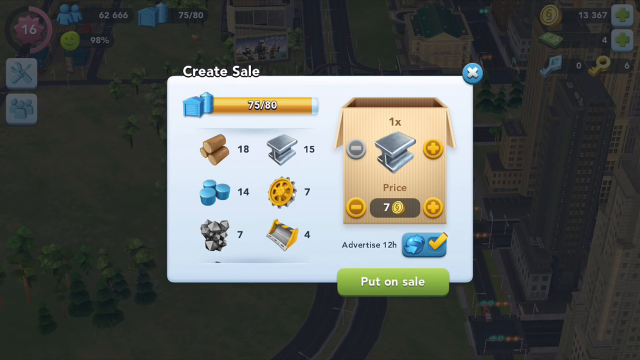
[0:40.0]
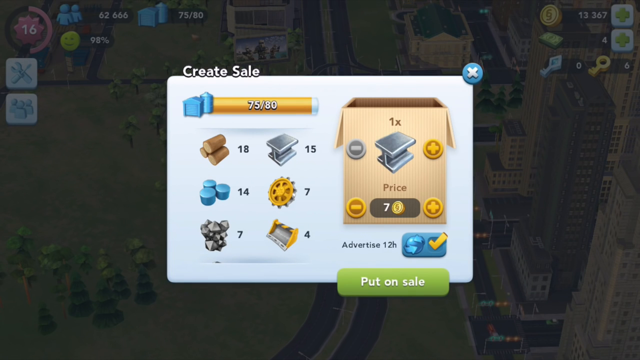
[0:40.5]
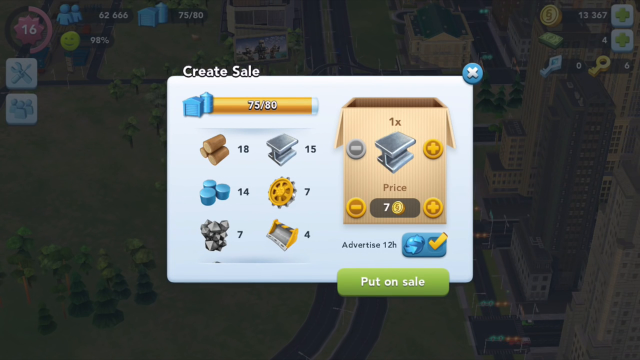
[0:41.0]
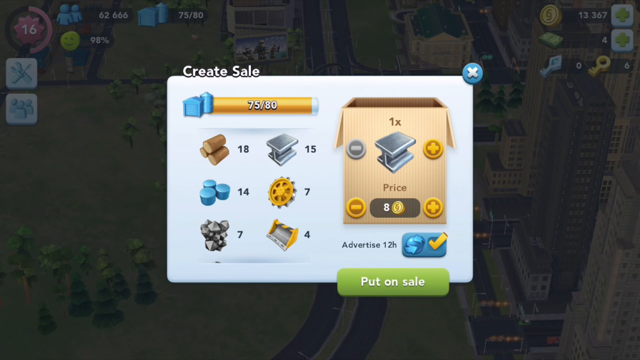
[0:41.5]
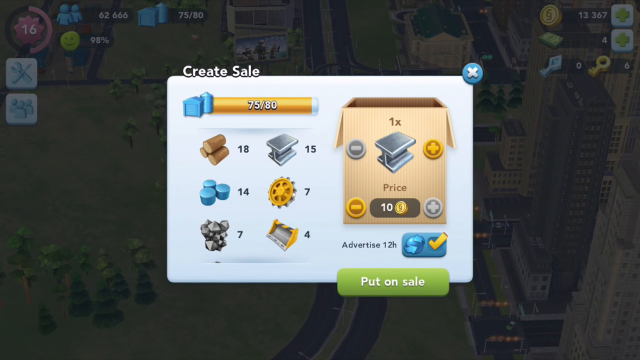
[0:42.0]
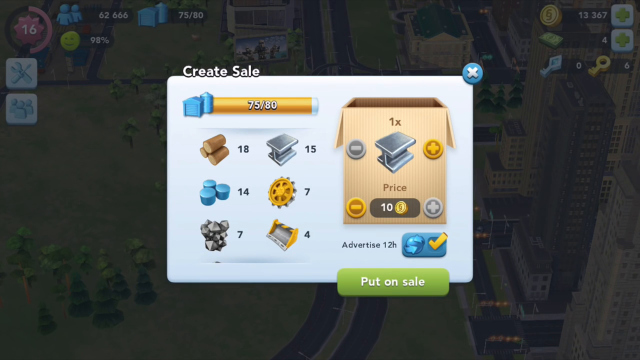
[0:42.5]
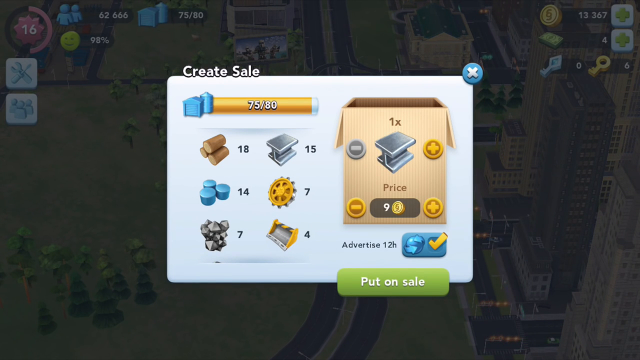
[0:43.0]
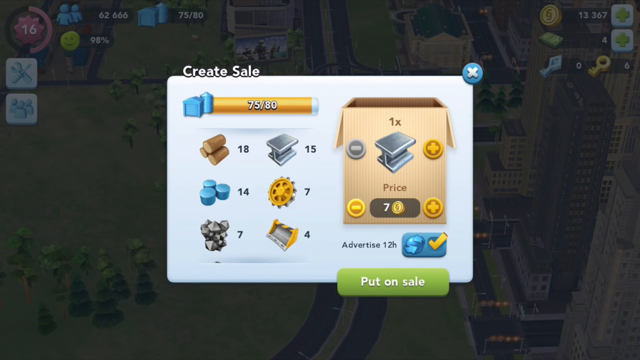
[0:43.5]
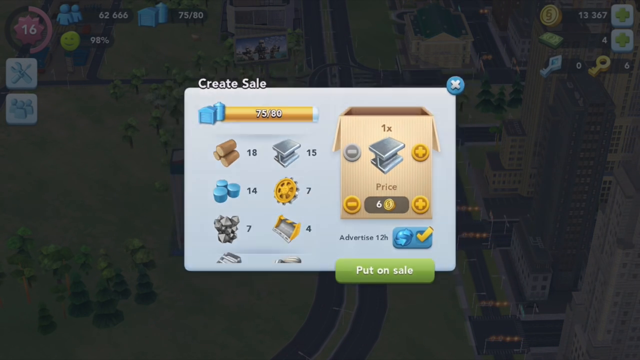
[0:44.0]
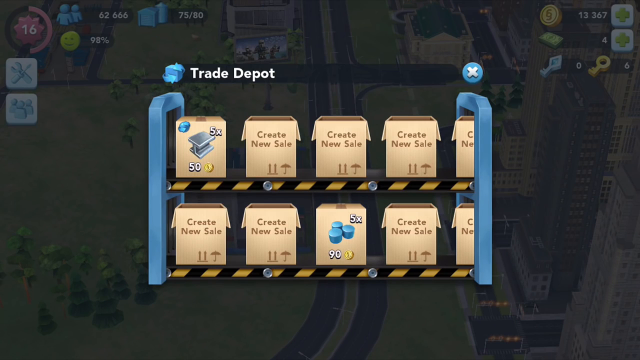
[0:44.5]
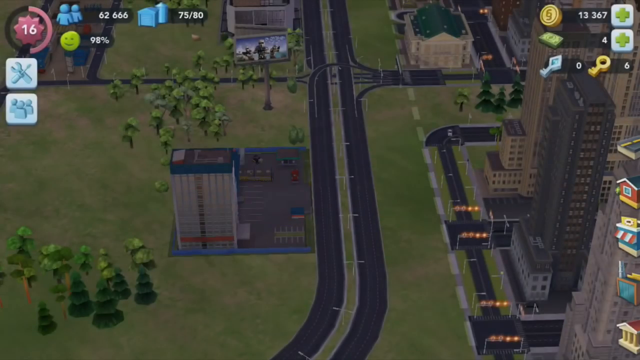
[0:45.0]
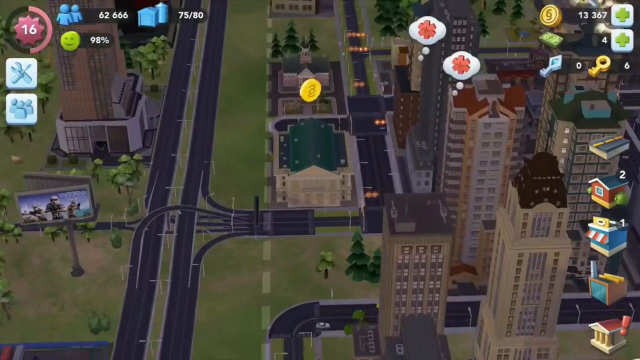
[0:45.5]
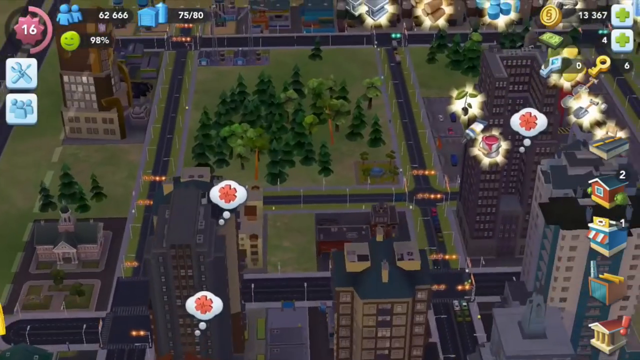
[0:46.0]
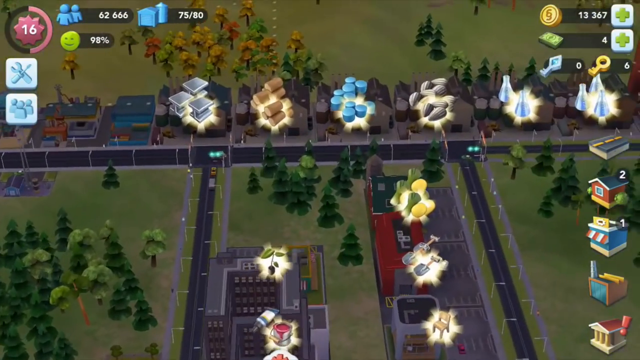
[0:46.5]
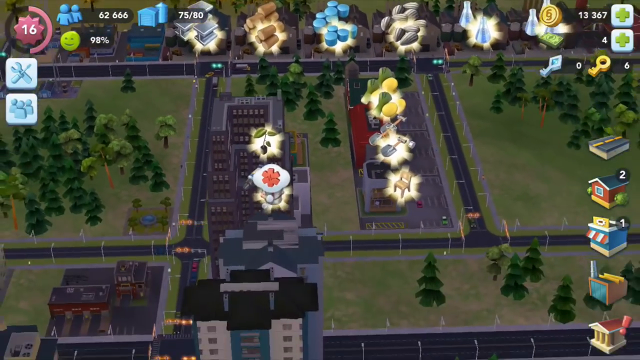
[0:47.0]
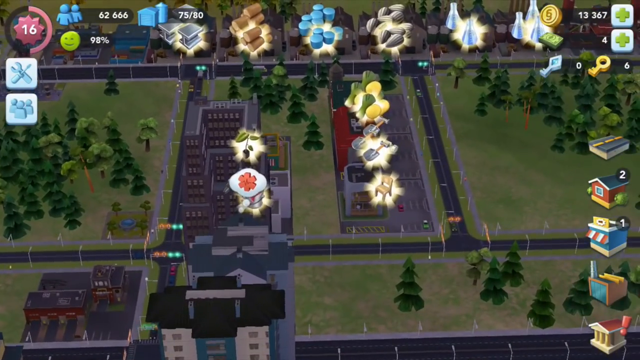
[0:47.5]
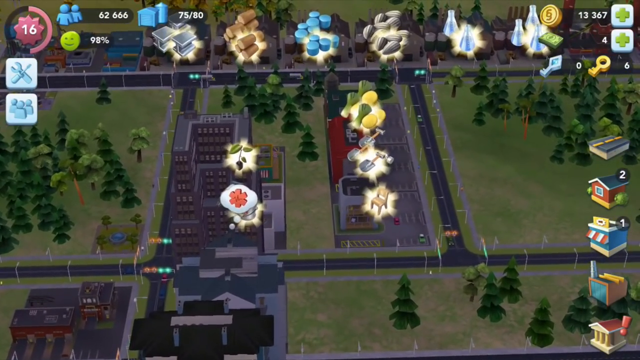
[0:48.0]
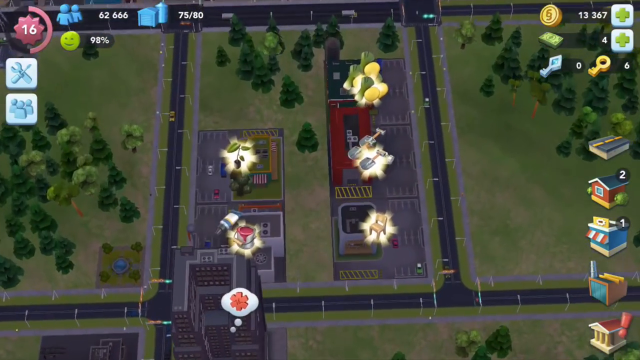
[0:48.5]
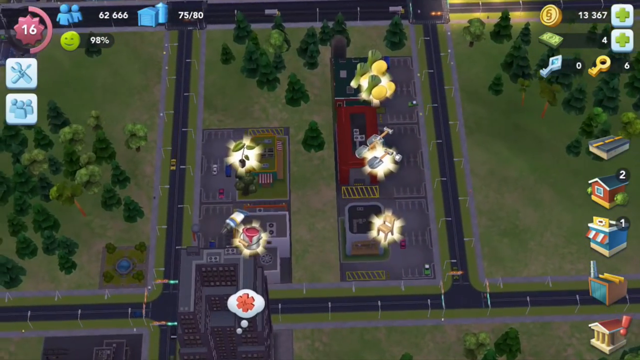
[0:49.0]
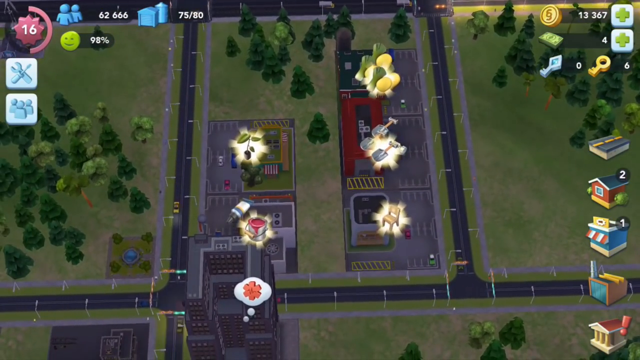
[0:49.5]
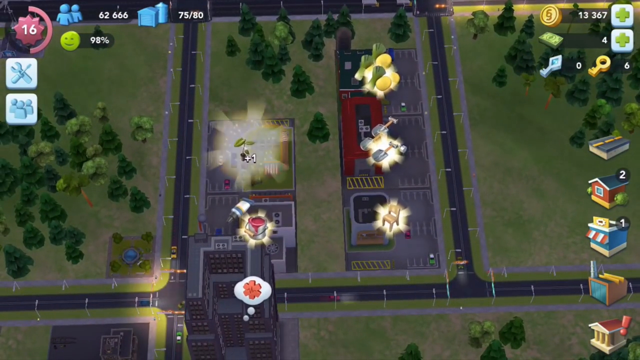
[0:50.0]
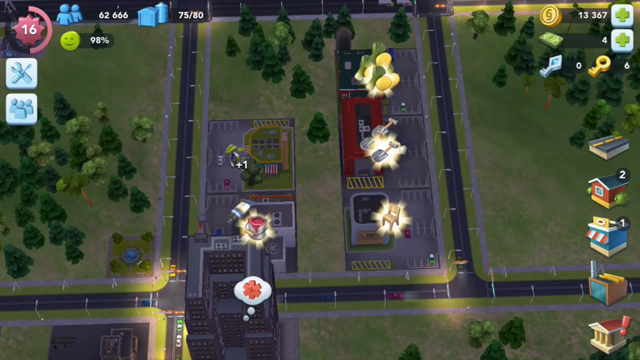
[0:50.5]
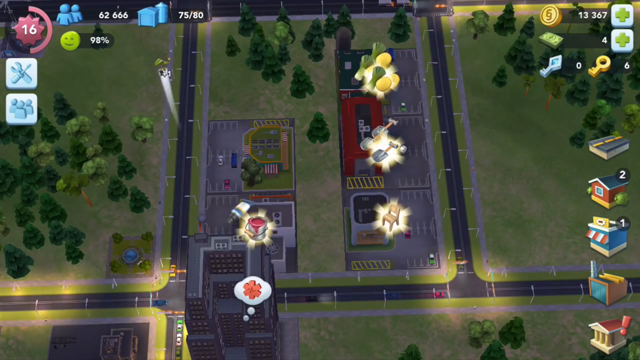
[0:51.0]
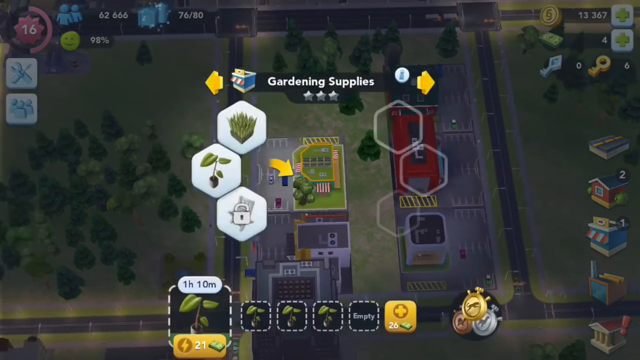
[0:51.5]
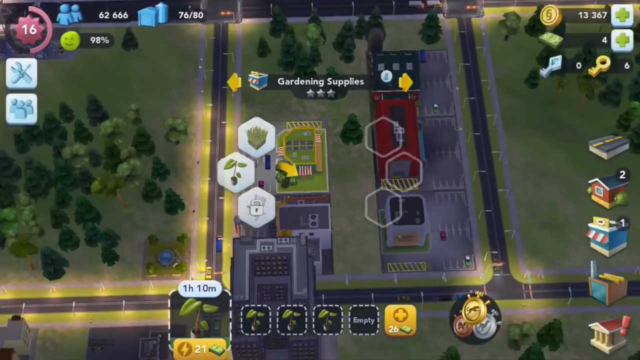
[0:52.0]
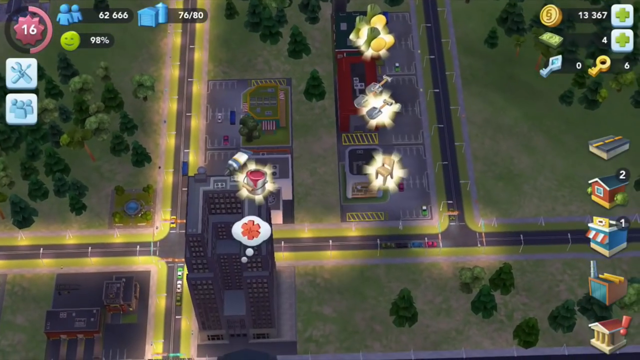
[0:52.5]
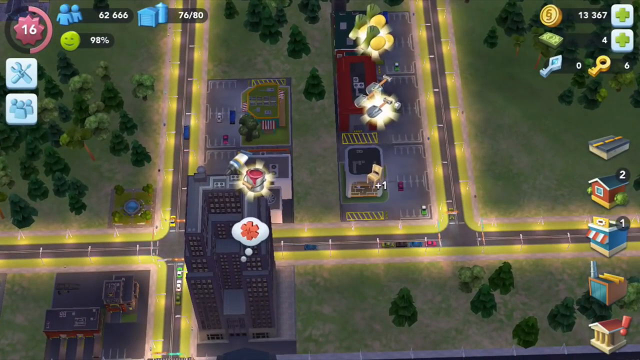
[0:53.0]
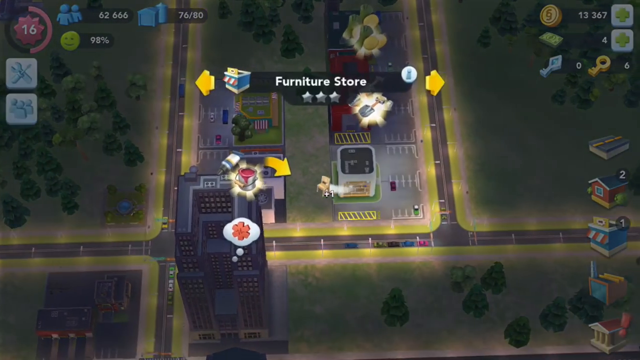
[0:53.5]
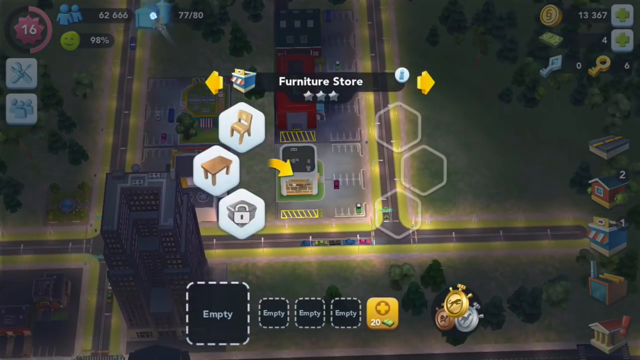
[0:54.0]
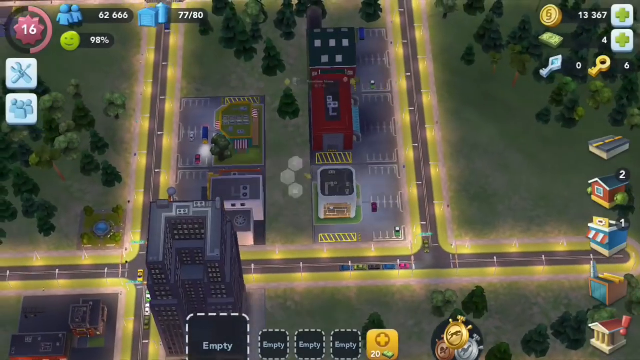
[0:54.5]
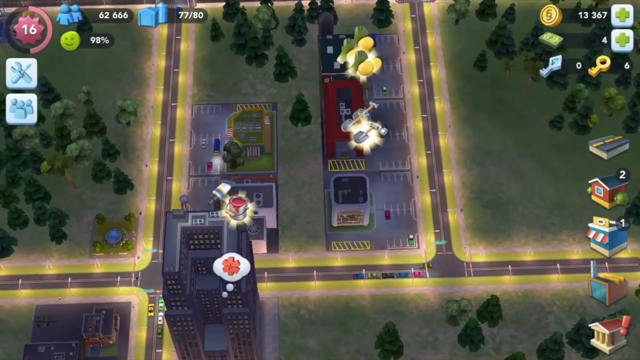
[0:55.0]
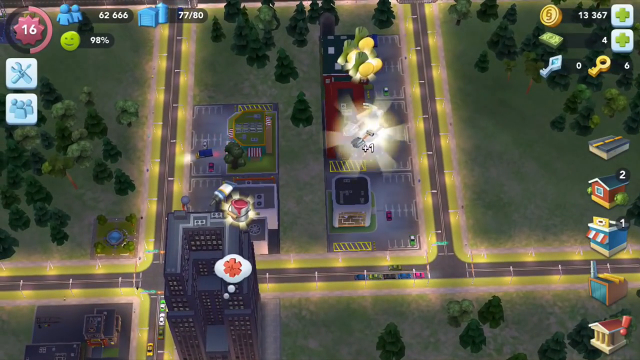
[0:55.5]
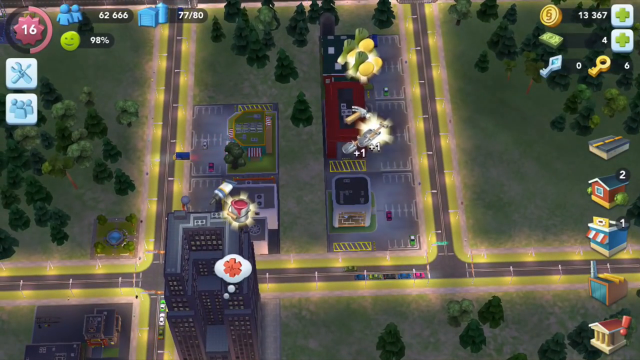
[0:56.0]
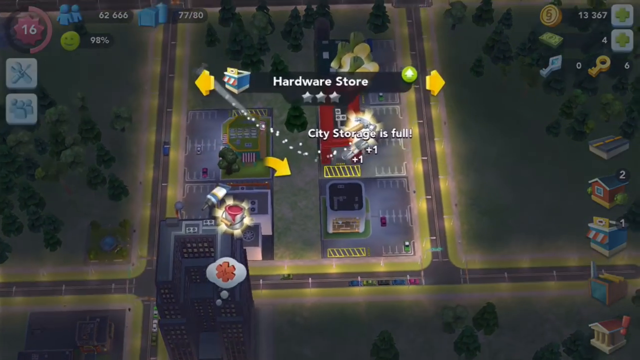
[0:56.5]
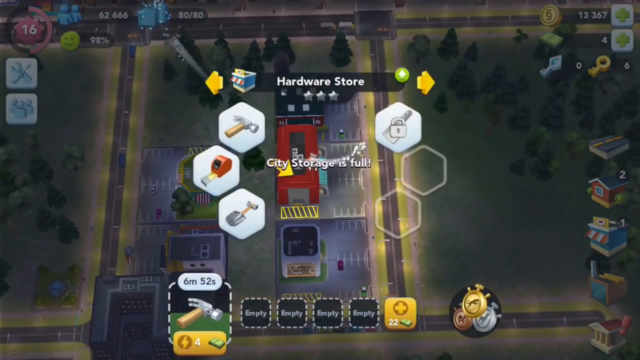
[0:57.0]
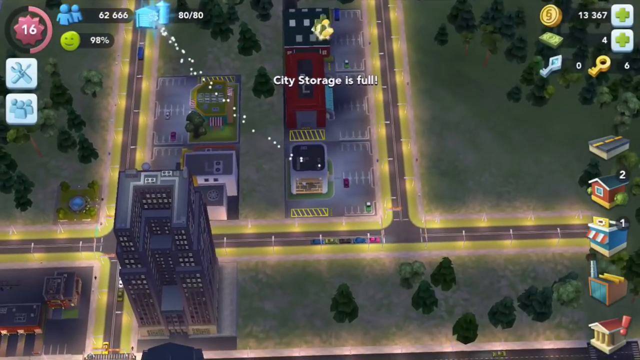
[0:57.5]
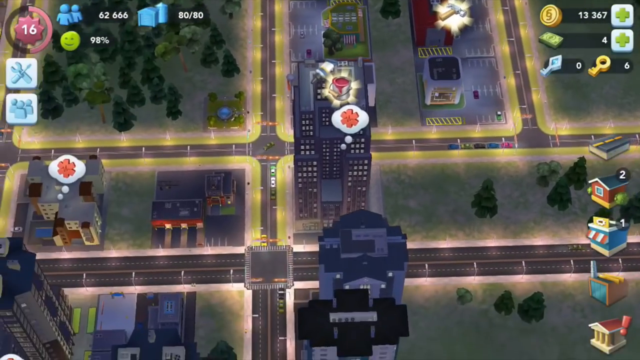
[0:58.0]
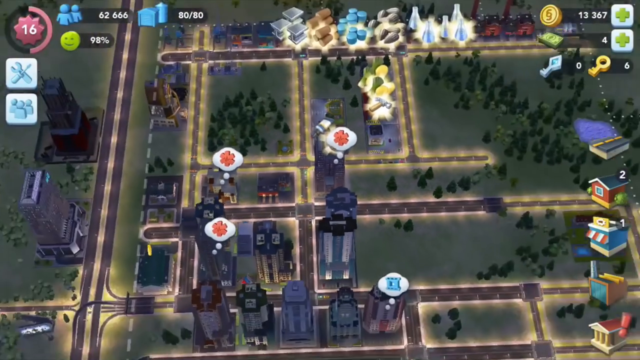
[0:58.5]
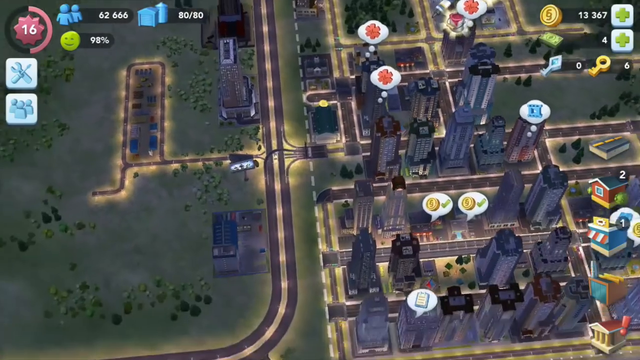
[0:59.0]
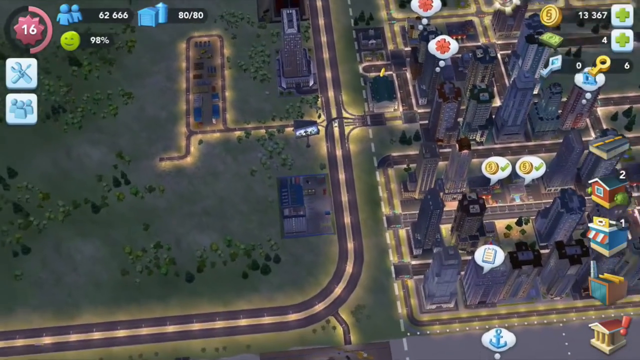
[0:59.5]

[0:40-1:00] The Create Sale window opens, showing "75/80" in a golden bar at the top of the section, right underneath the Create Sale title. Underneath are items with counts: what looks like logs of wood at 18, other items at 14 and 7, steel at 15, and 7 cogs or something else. This appears to be where pricing is done, and a selection is made. The view returns to the city, with the camera moving back and forth a little toward a certain area. Garden supplies are selected, with three stars underneath and six hexagon-like slots, three on each side; the three on the left are filled and the three on the right are not. The window is closed and opened again. The player seems to be doing something with the resources, moving over a hammer and clicking on a set, and apparently creates some kind of furniture.